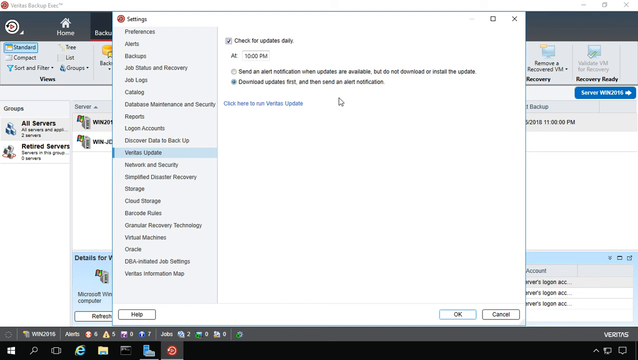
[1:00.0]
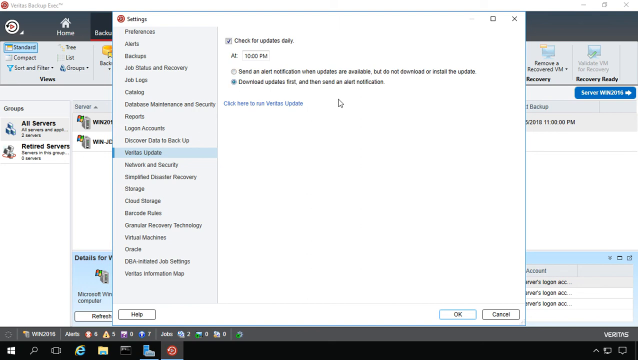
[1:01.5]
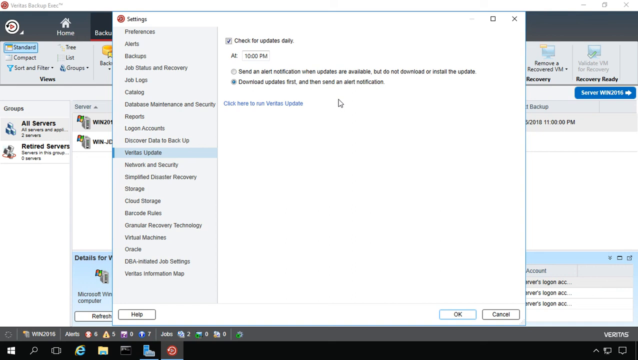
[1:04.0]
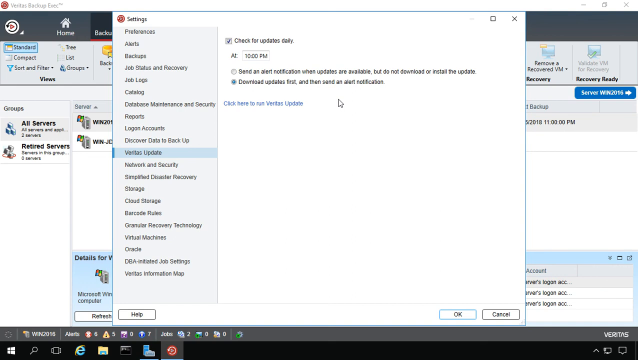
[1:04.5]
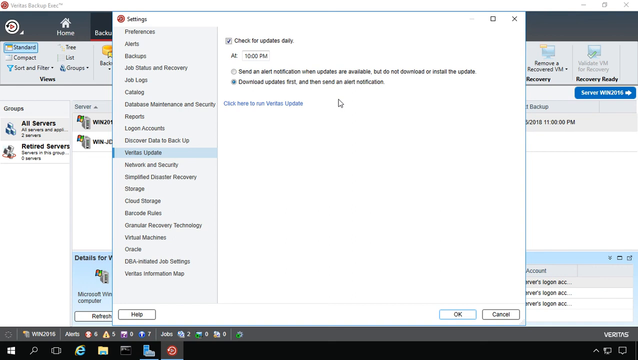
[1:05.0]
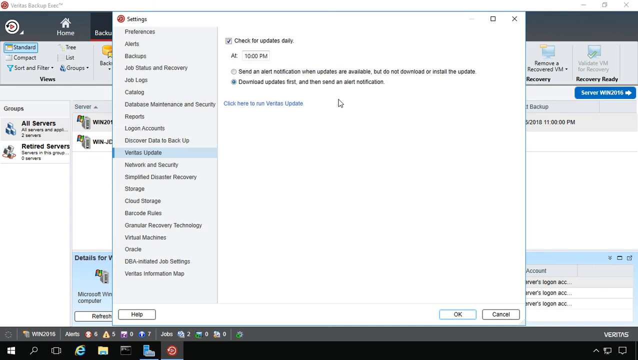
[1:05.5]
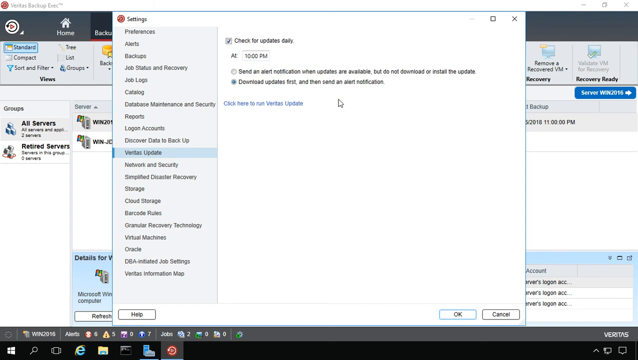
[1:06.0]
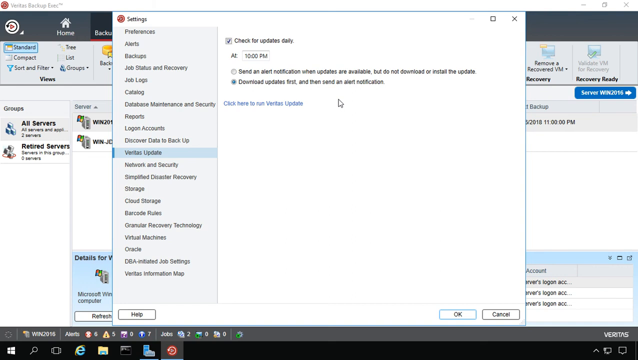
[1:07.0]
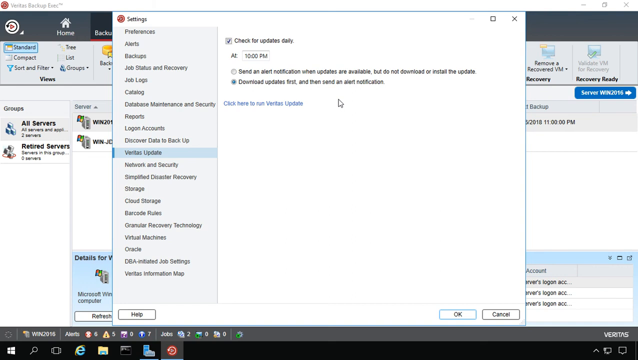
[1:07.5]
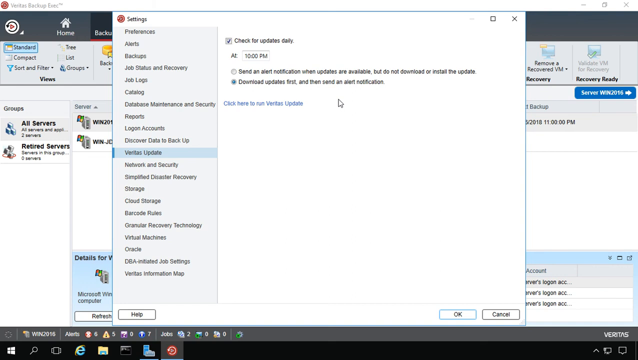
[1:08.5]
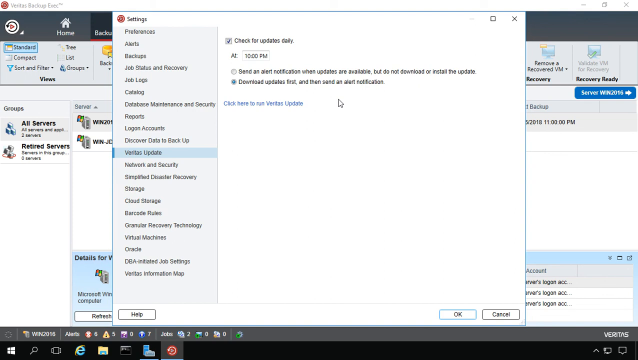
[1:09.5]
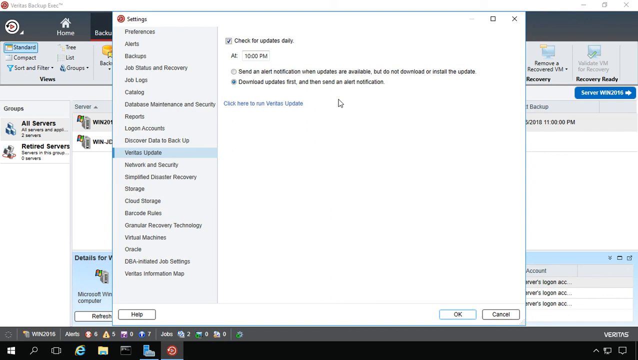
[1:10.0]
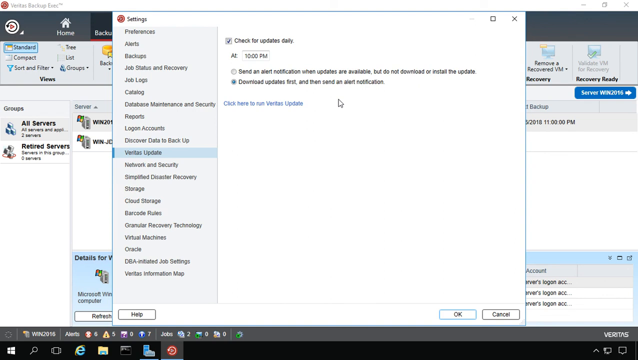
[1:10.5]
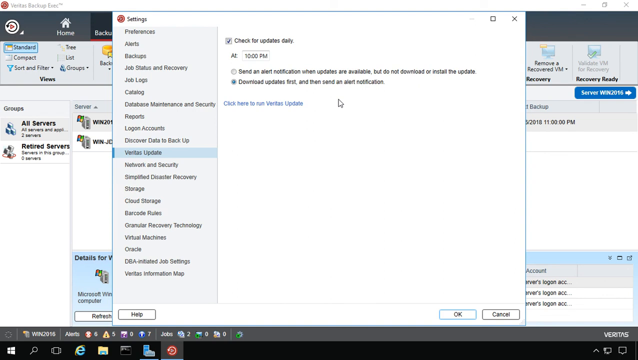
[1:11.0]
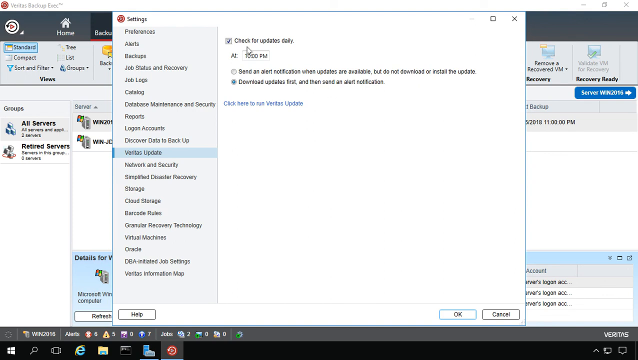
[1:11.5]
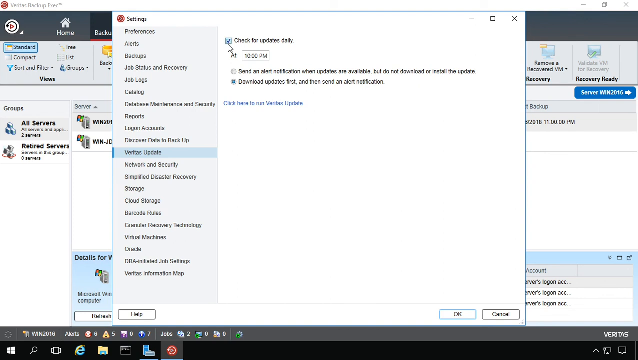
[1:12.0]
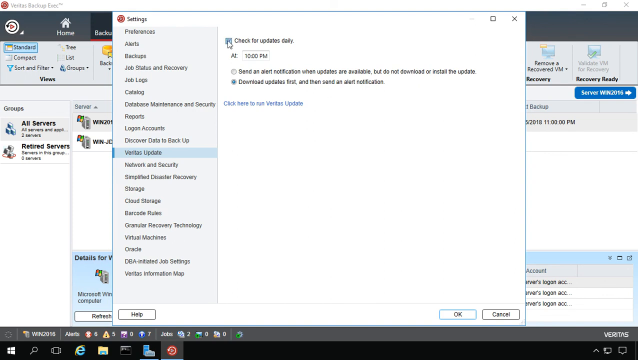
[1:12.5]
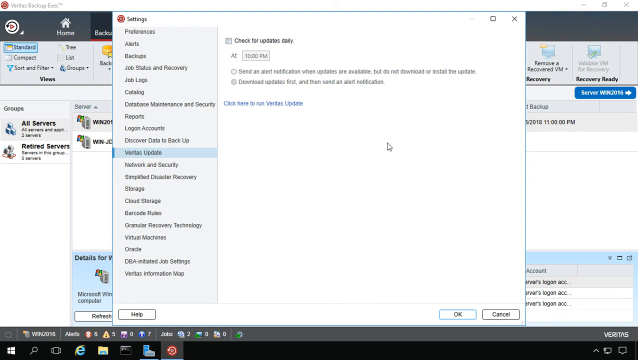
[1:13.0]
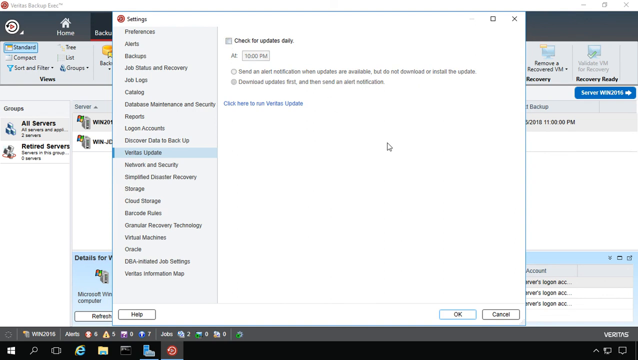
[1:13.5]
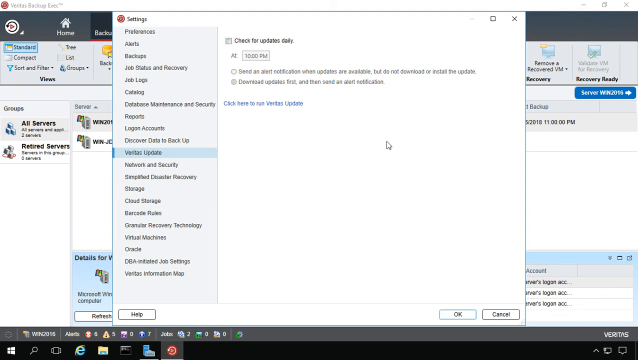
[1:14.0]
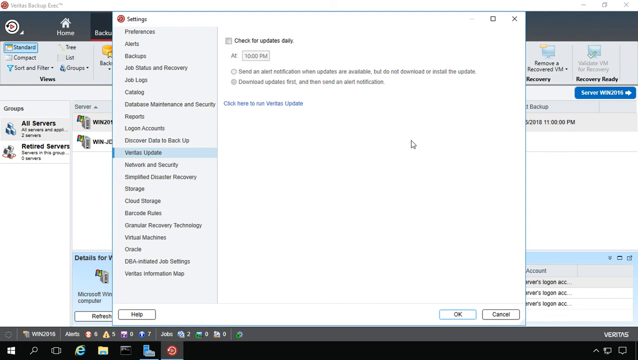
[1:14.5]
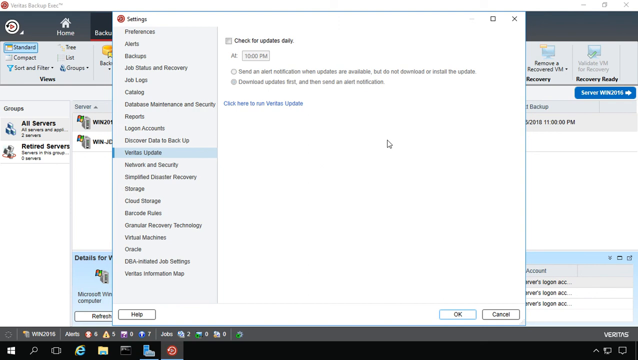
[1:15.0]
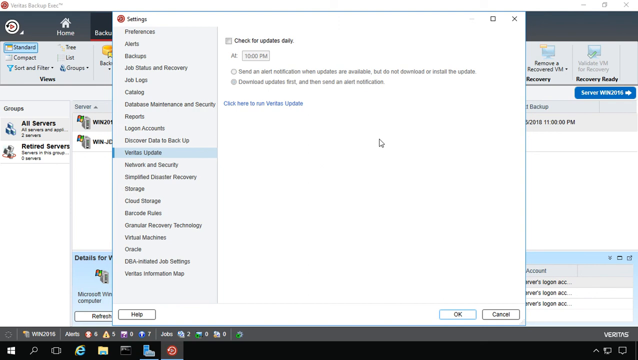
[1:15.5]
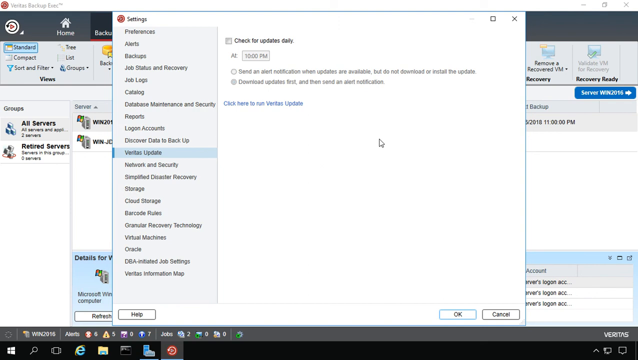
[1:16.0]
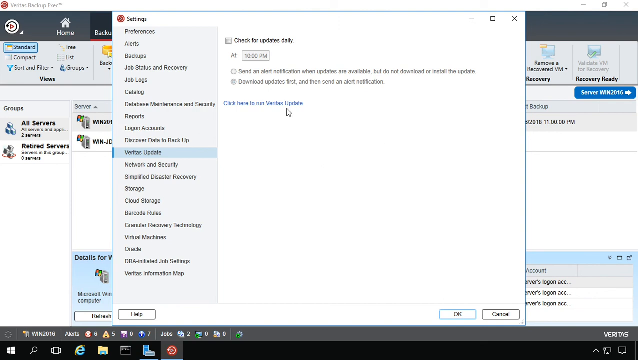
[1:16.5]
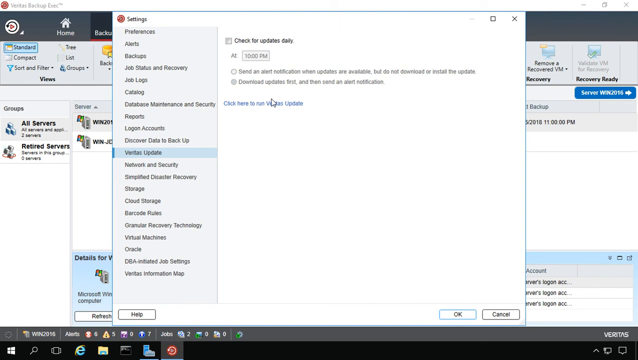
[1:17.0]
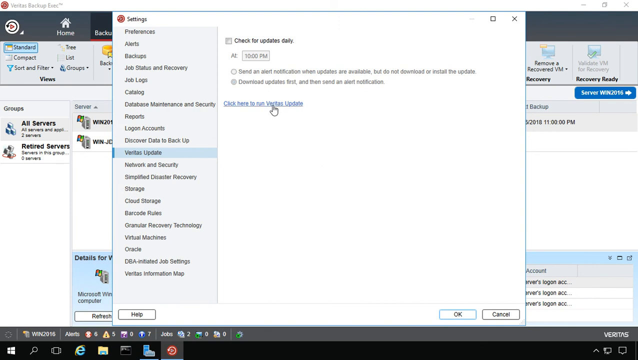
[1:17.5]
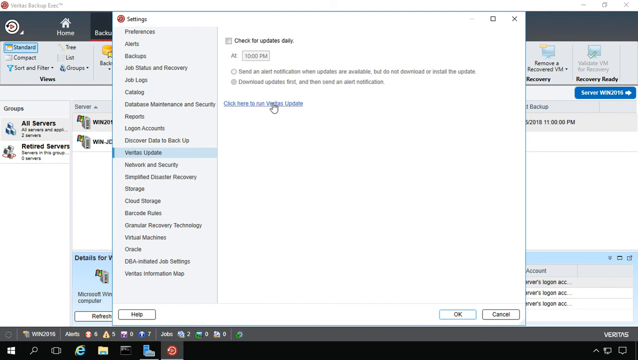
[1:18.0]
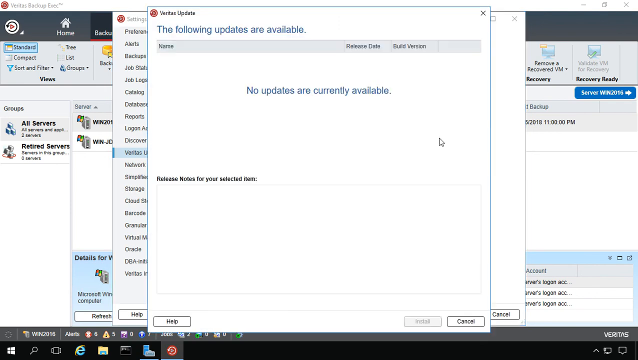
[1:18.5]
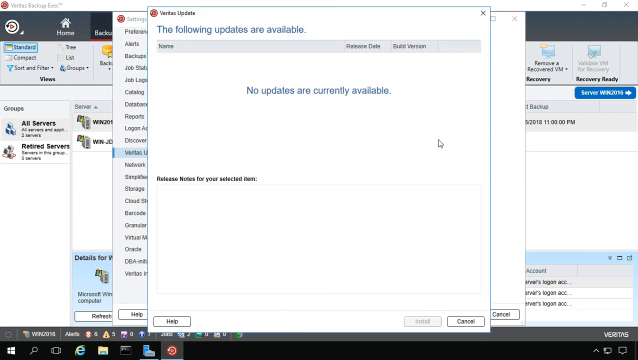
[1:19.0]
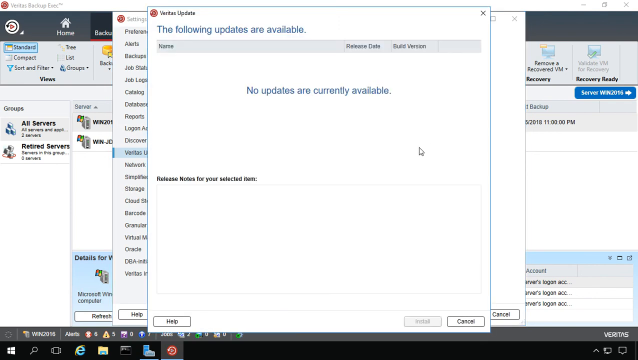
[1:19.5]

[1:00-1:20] The Veritas Update menu shows daily update checks set to download updates first and then send the alert to the user. The person then unchecks the daily update check, which closes the entire Veritas Update menu. The background stays the same and the cursor moves little. The person then moves the cursor right on top of Veritas Update to run it, and a screen appears saying "following updates are available", but there are no updates listed and there are no release notes. The window is white with blue letters and some black letters on its lower part. A help option is in the bottom left corner of the window, and a cancel button and an install button are on the lower right side.